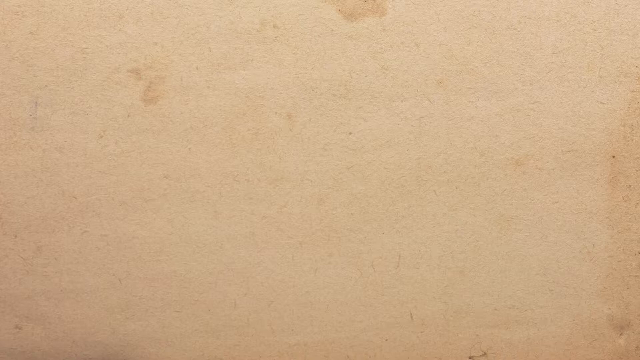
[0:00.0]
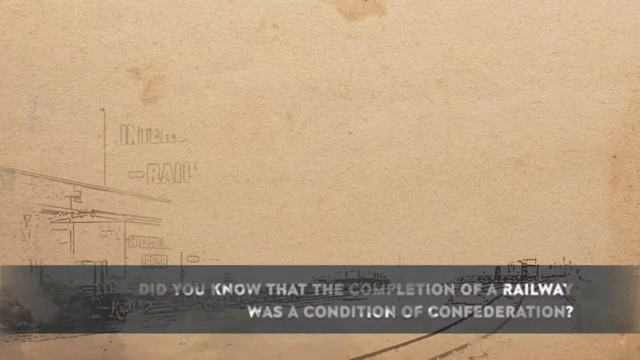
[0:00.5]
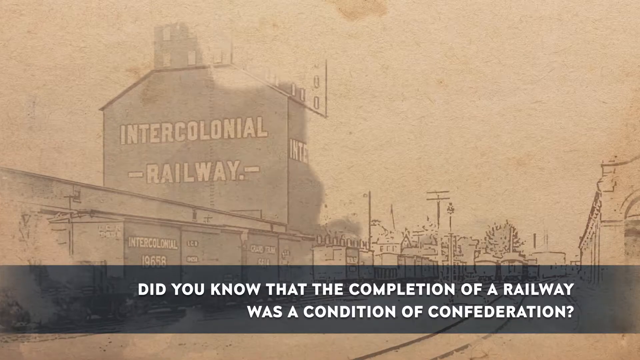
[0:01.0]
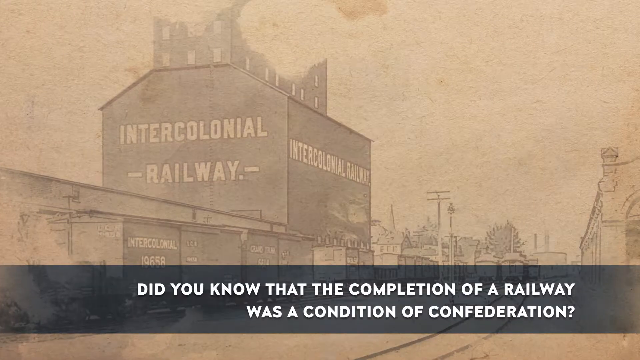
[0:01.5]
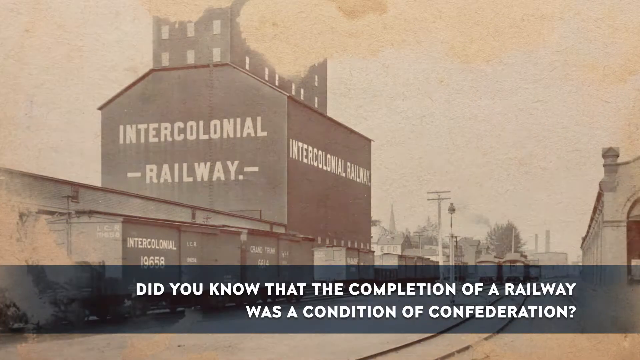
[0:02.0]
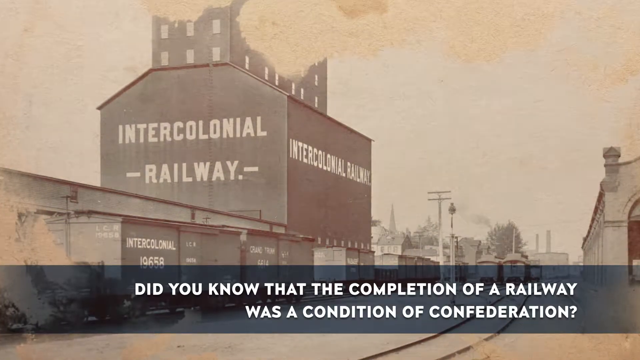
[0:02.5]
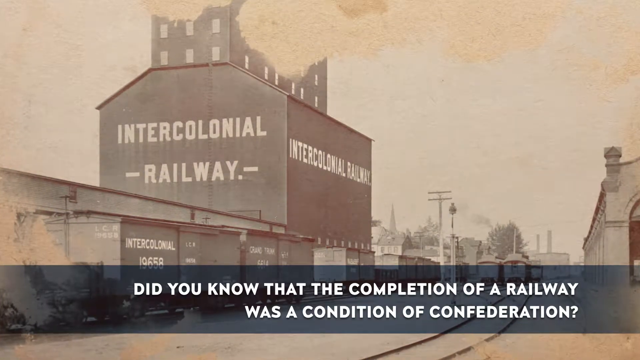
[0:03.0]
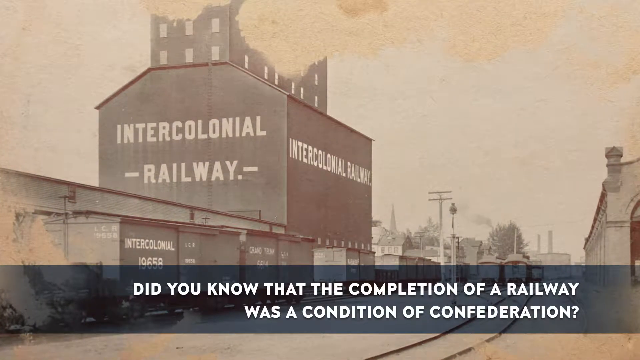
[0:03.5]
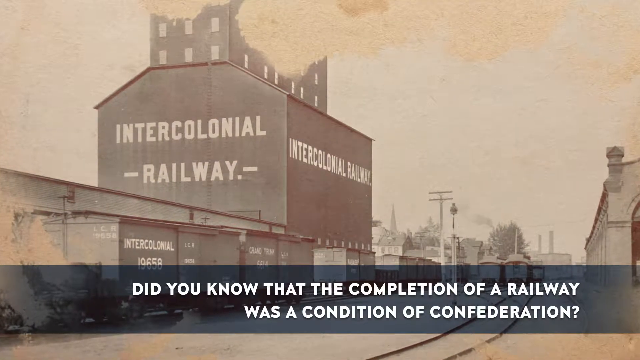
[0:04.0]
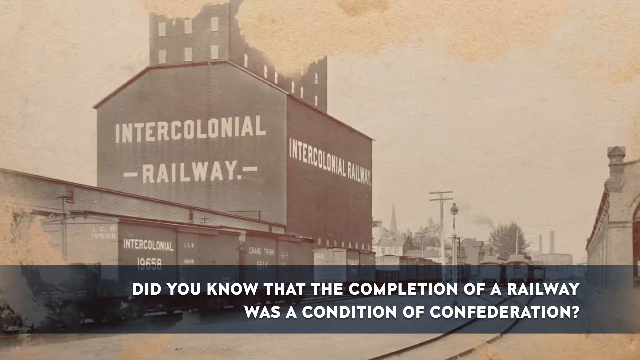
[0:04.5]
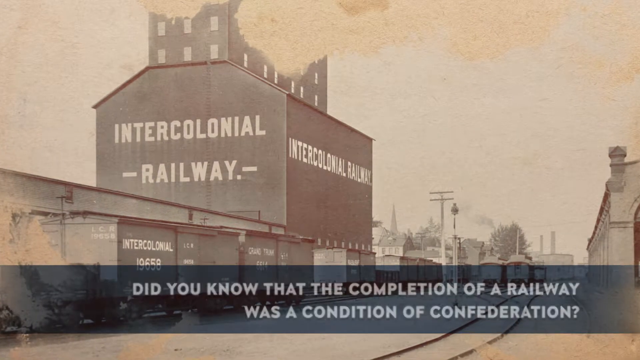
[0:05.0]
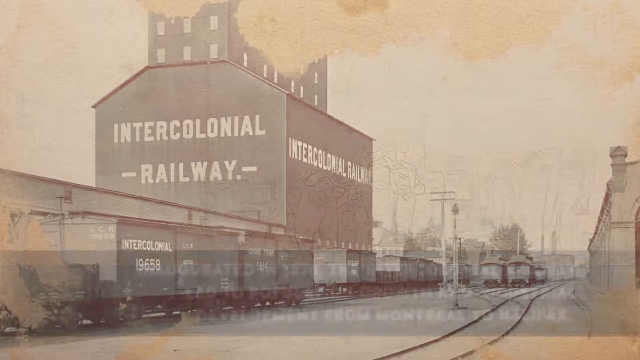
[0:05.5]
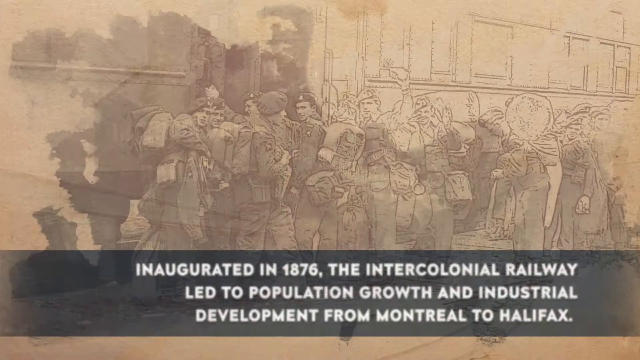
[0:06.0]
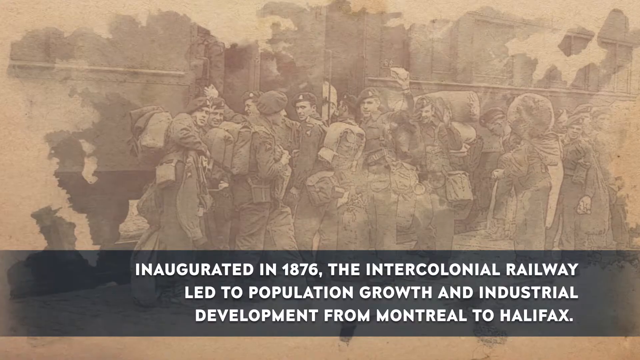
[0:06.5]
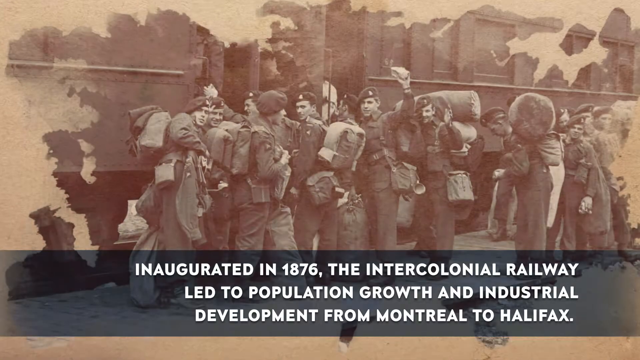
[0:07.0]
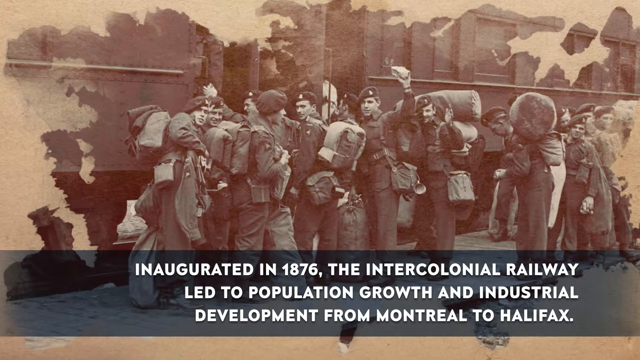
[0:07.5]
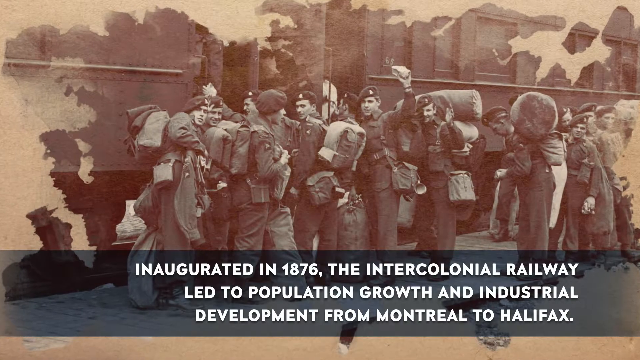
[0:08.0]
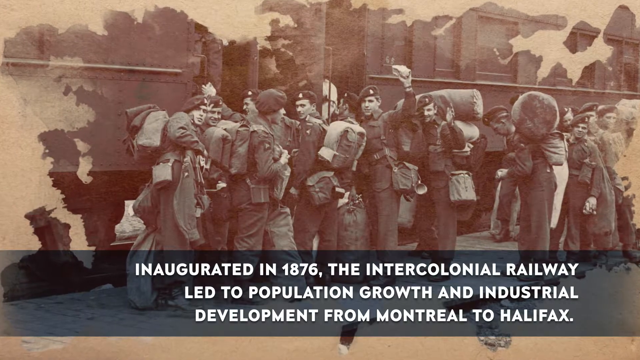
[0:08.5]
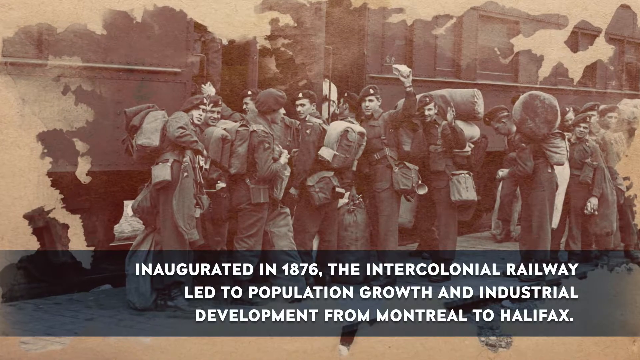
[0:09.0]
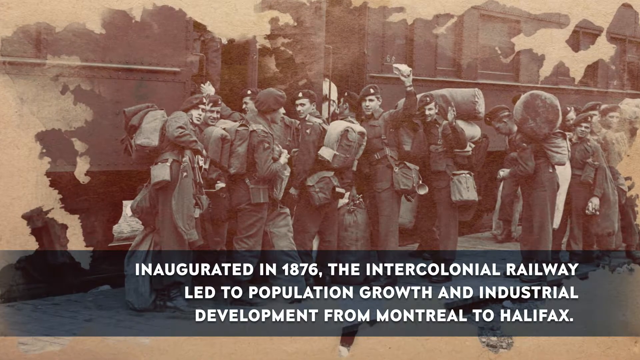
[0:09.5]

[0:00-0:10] An animation shows a somewhat simplistic drawing of the old Intercolonial Railway: a small town with a train running through it. A translucent gray banner at the bottom reads, "Did you know that the completion of a railway was a condition of the Confederation?" The colors begin to get bolder, and a real-life photo of the Intercolonial Railroad appears. Another image shows men on the outside of a train car, holding onto large bags strapped onto their backs. The caption reads, "Inaugurated in 1876, the Intercolonial Railway led to population growth and industrial development from Montreal to Halifax."